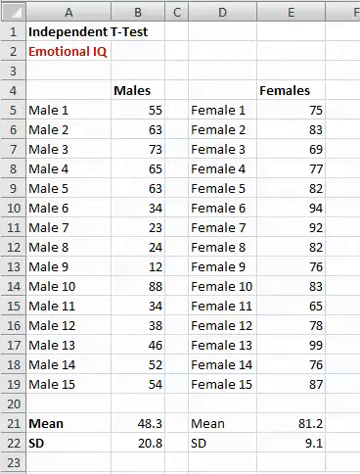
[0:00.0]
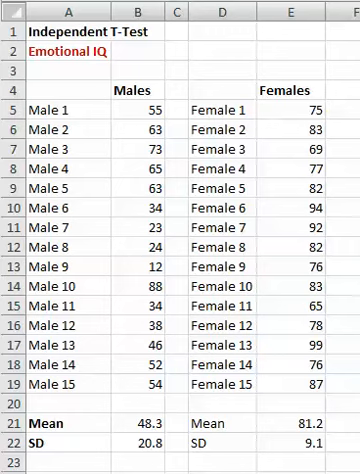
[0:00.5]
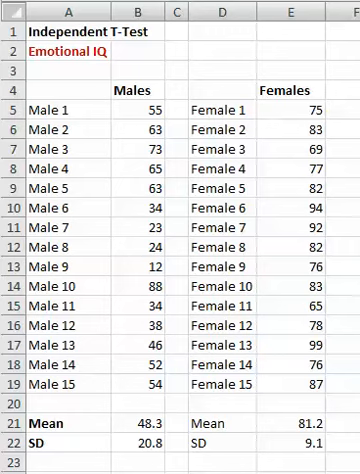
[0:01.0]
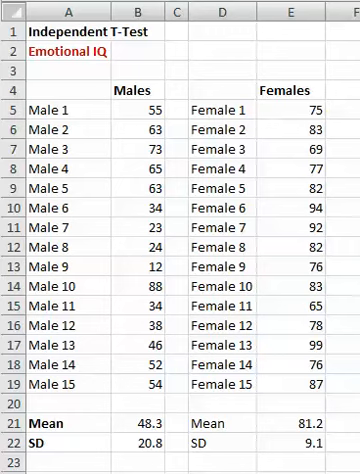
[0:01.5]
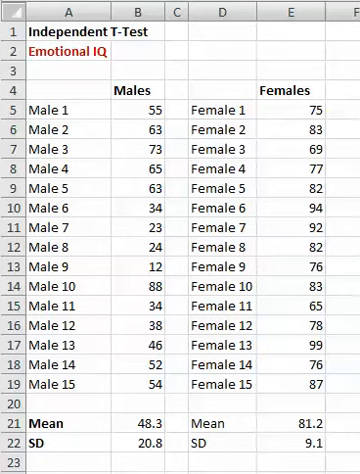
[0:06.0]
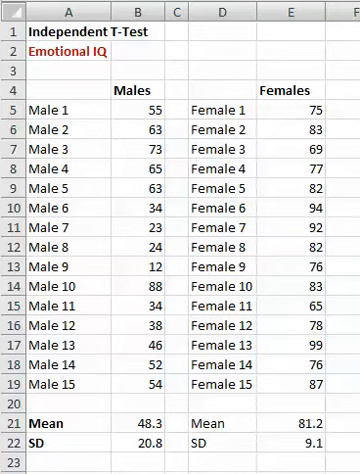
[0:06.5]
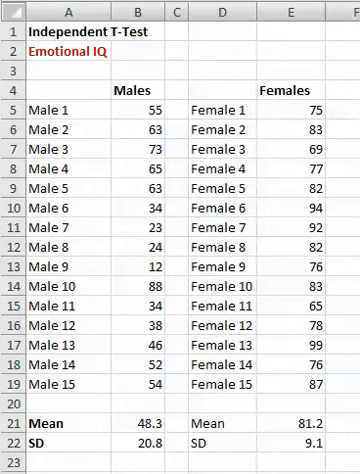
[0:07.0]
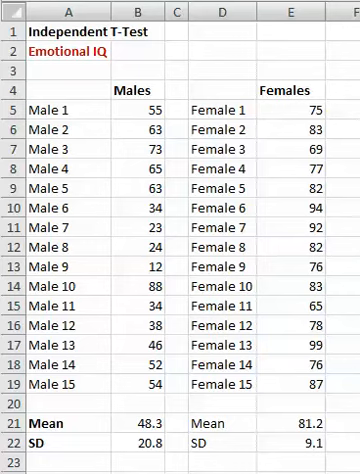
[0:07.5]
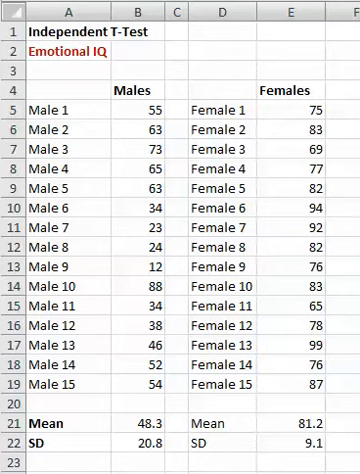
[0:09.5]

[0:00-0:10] An Excel table is on screen with the title "Independent T-Test, Emotional IQ" and separate boxes for males and females. The male entries read: male 1, 55; male 2, 63; male 3, 73; male 4, 65; male 5, 63; male 6, 34; male 7, 23; male 8, 24; another male, 12; male 10, 88; male 11, 34; male 13, 46; male 14, 55; and male 15, 54. Below them the mean is 48.3 and the SD is 20.8. The female entries read: female 1, 75; female 2, 83; female 3, 69; female 4, 77; female 5, 82; female 6, 94; female 7, 92; female 8, 82; female 9, 76; female 10, 83; and more. For the females the mean is 81.2 and the SD is 9.1.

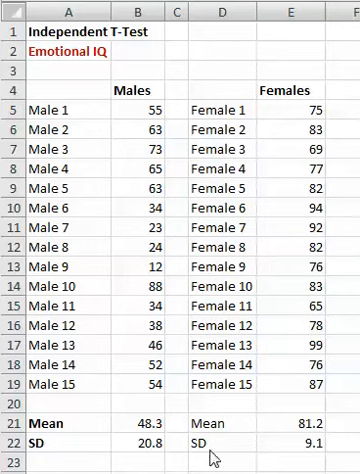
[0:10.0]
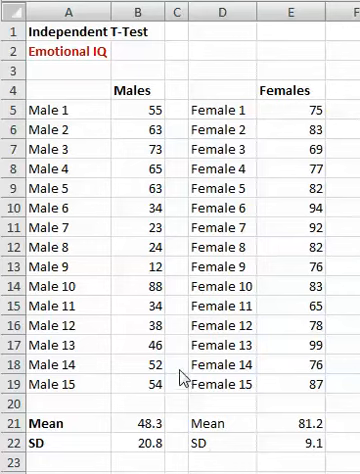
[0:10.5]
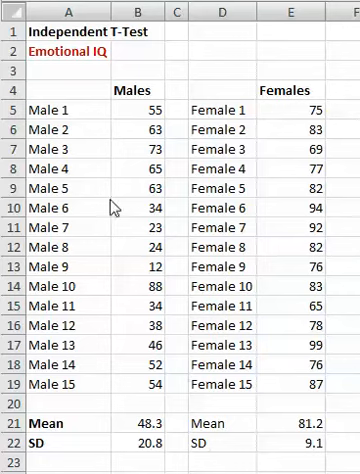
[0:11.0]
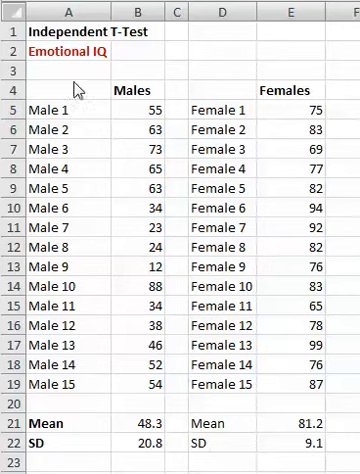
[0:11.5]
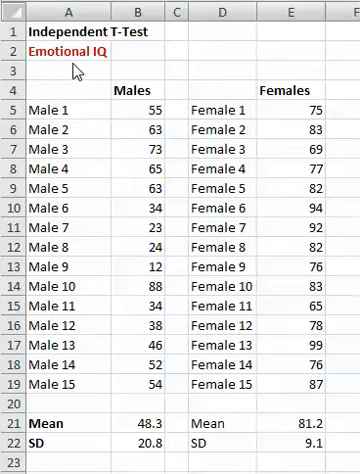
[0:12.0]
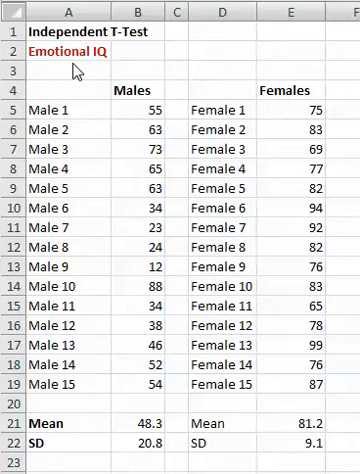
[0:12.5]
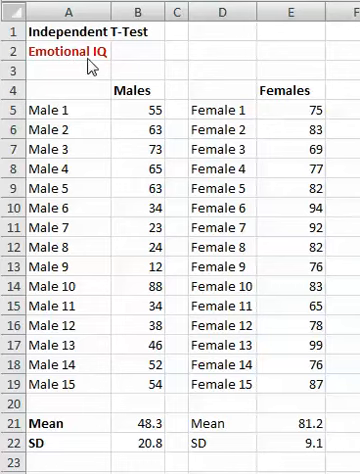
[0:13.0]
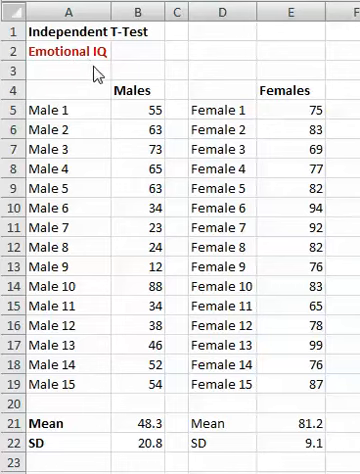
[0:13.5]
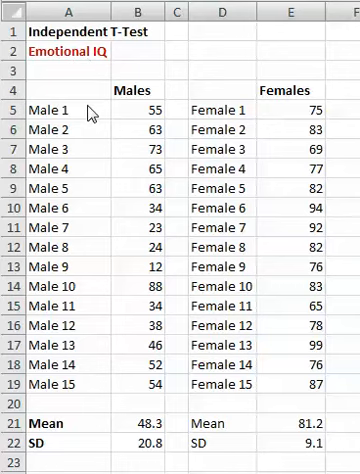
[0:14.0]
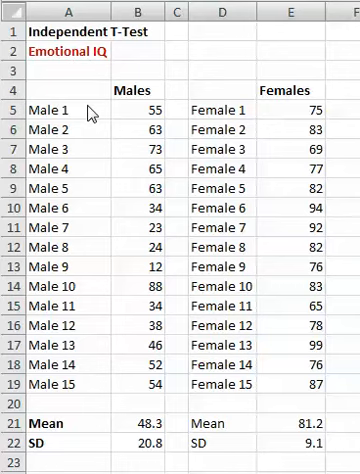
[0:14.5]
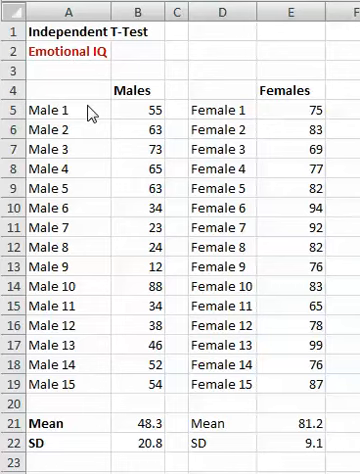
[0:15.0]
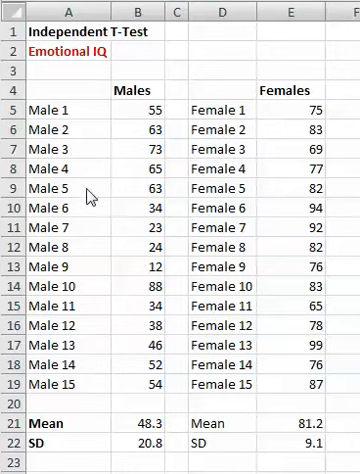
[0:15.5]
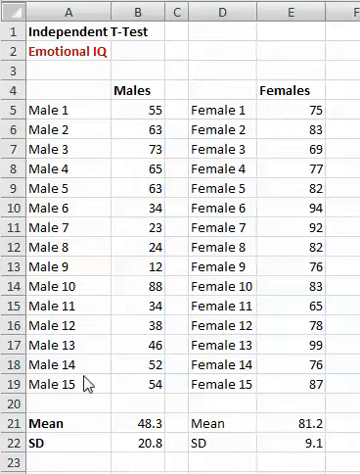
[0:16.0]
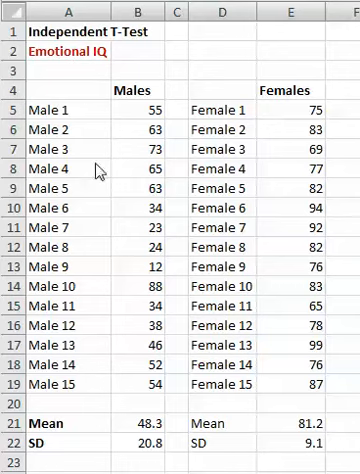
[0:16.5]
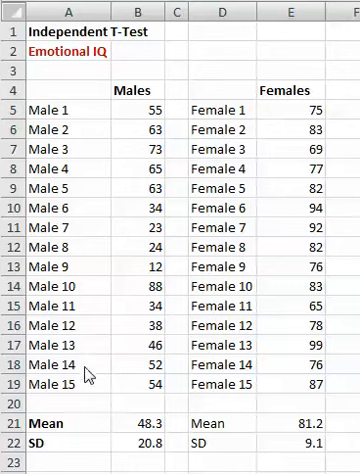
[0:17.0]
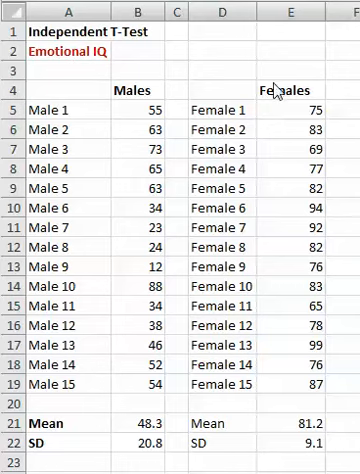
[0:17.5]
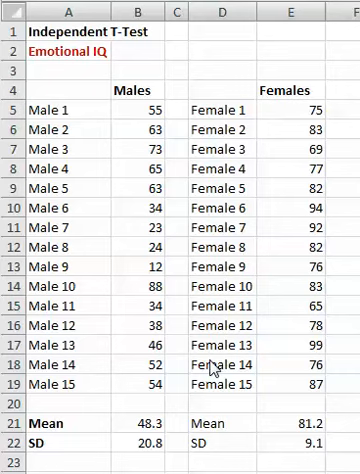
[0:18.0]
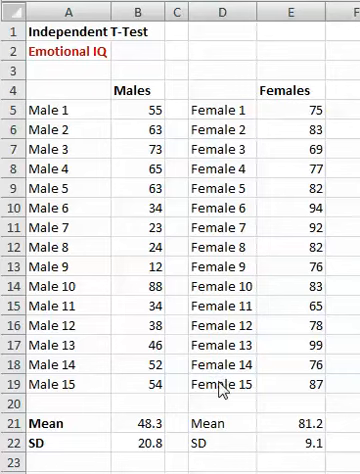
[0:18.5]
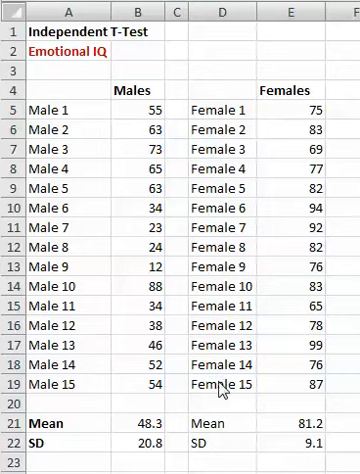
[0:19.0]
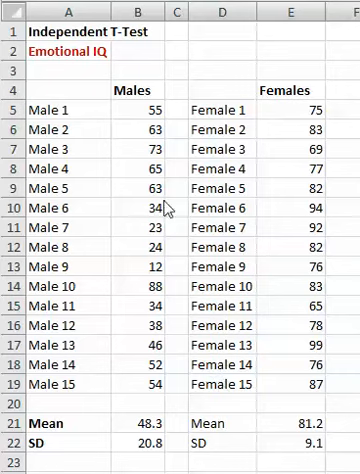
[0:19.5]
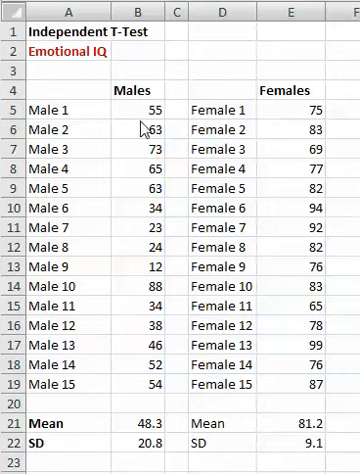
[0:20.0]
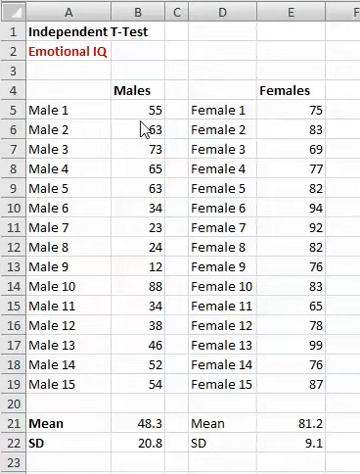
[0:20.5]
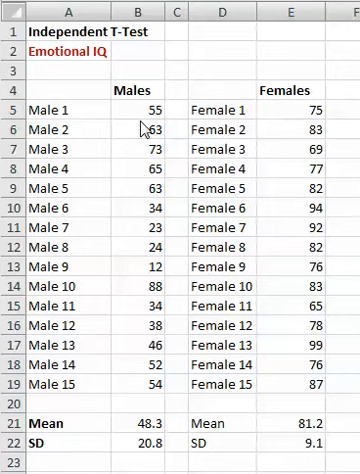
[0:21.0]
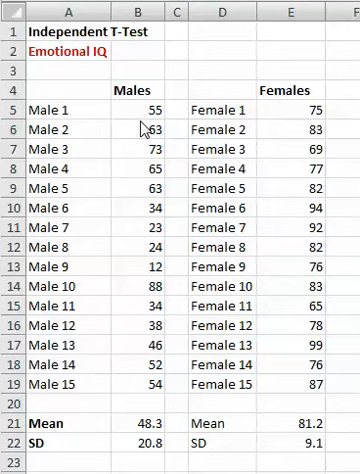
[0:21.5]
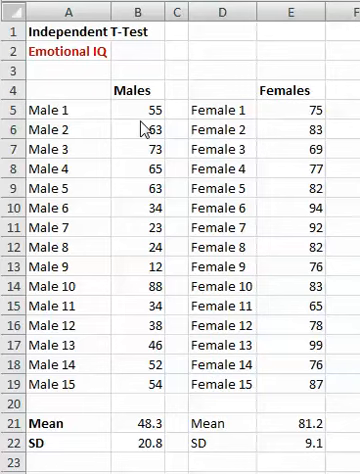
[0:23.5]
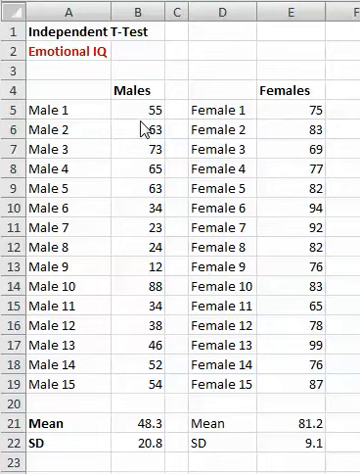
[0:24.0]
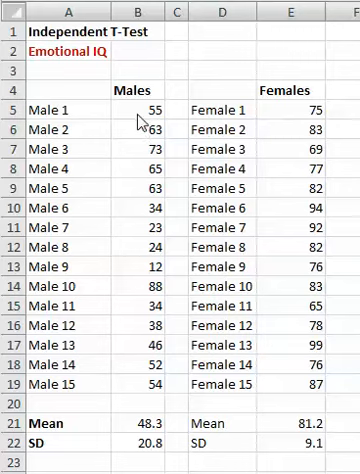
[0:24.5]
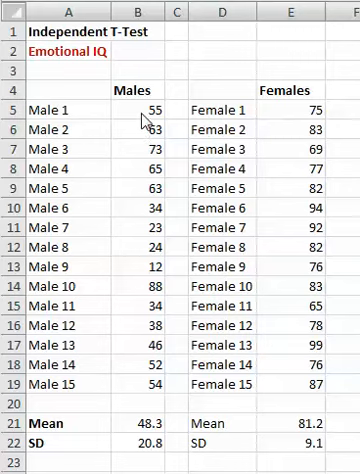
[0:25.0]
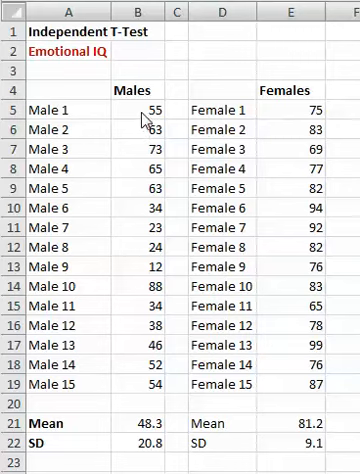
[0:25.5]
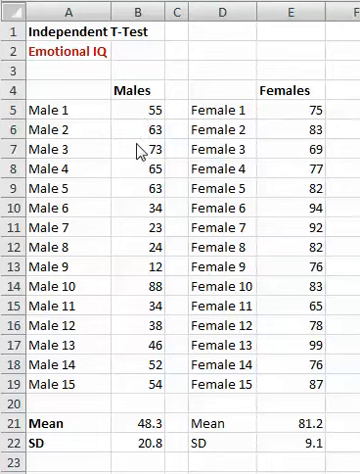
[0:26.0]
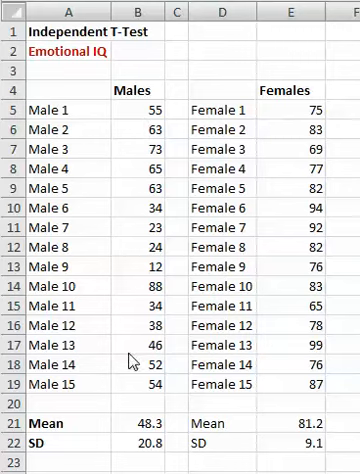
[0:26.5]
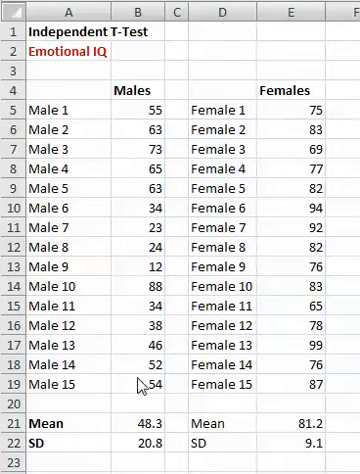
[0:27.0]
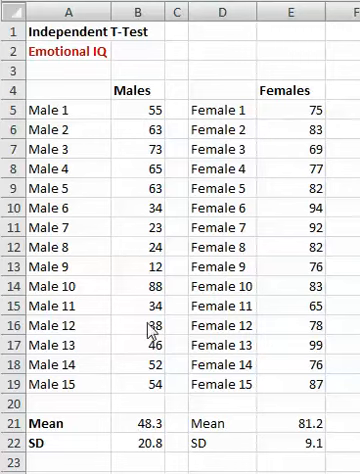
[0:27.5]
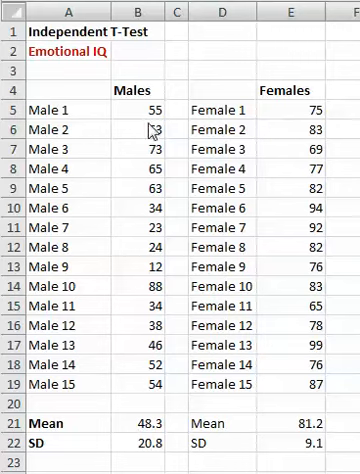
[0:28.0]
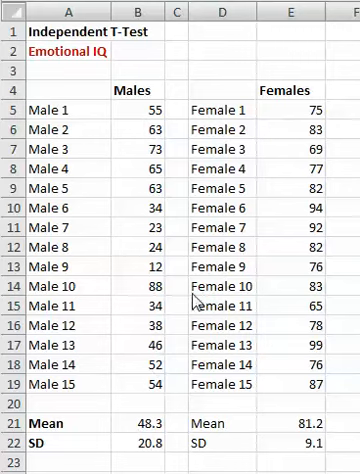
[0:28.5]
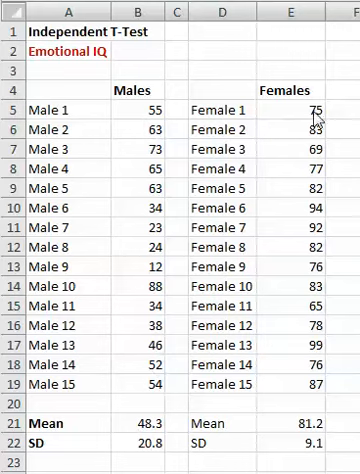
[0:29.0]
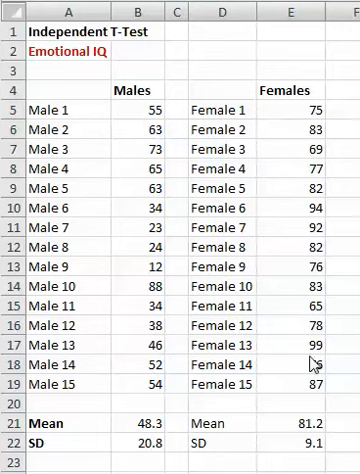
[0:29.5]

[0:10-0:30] The same table is on screen, and someone controlling the mouse points out details of the table with the cursor. The table's topic is "independent test emotional IQ", and it has male and female sections. Males 1 through 15 are listed with values 55, 63, 73, 65, 63, 34, 22, 23, 24, 12, 88, 34, 38, 46, 52 and 54, along with summary statistics including a mean of 48.3. Females 1 through 15 are also listed with their own values, and their summary statistics show a mean of 81.2 and an SD of 9.1.